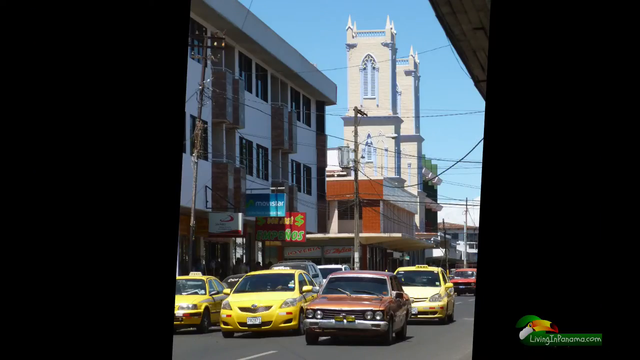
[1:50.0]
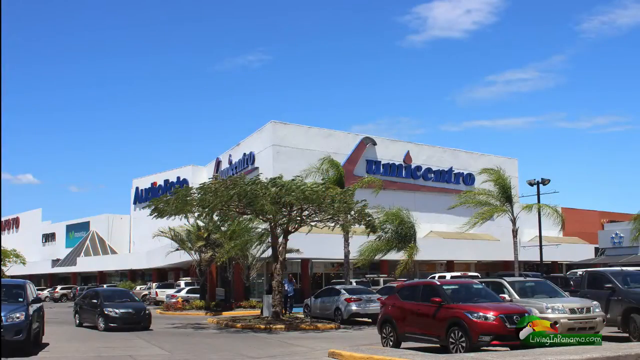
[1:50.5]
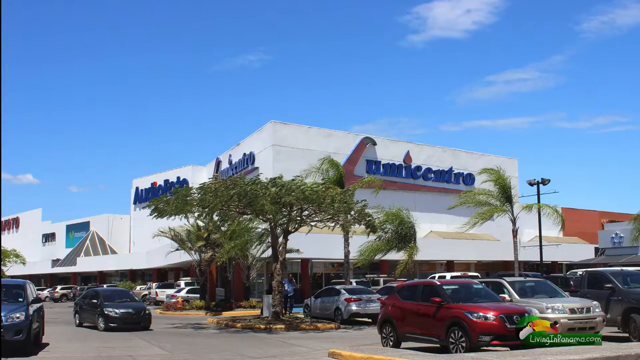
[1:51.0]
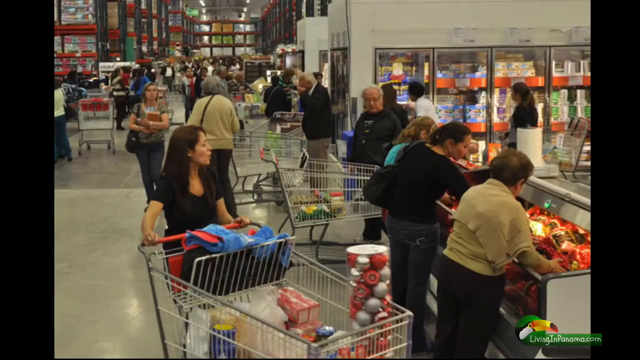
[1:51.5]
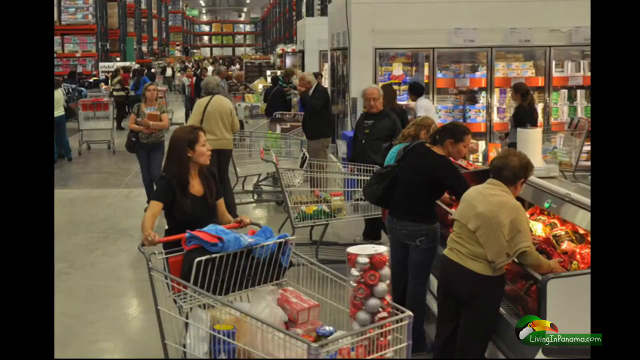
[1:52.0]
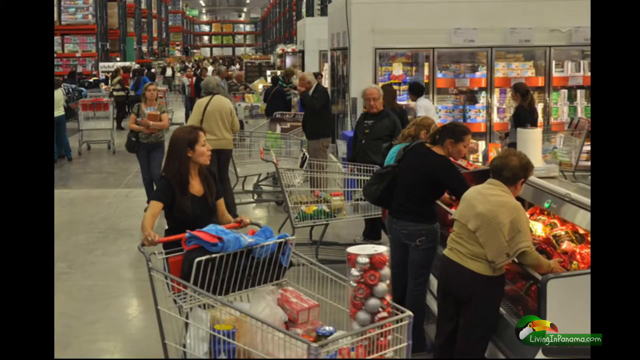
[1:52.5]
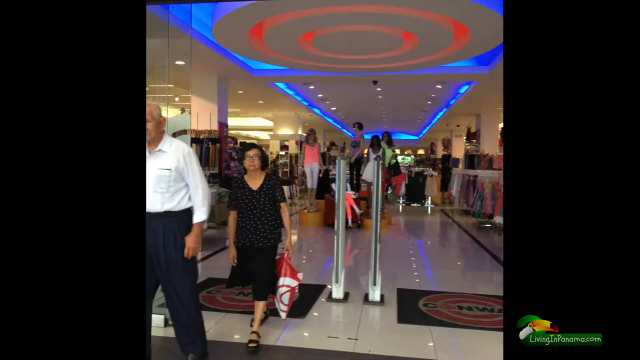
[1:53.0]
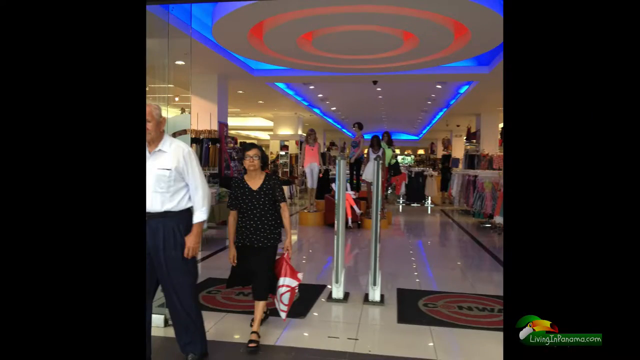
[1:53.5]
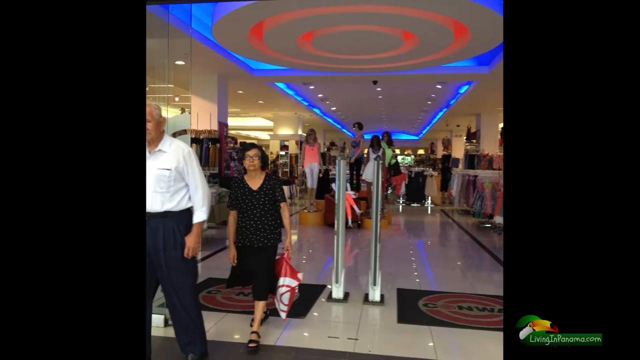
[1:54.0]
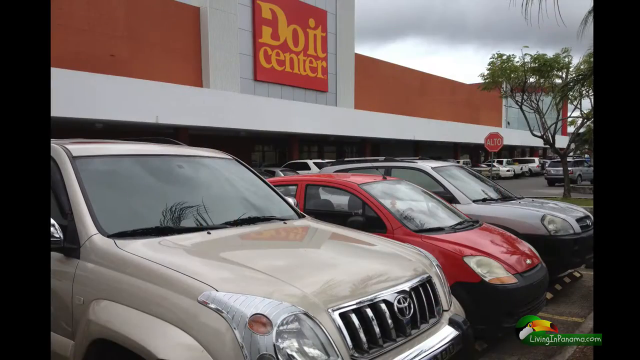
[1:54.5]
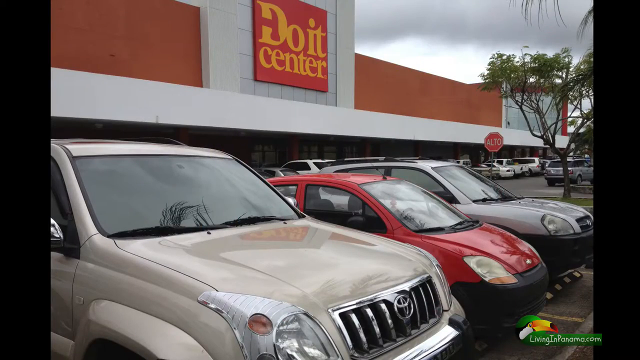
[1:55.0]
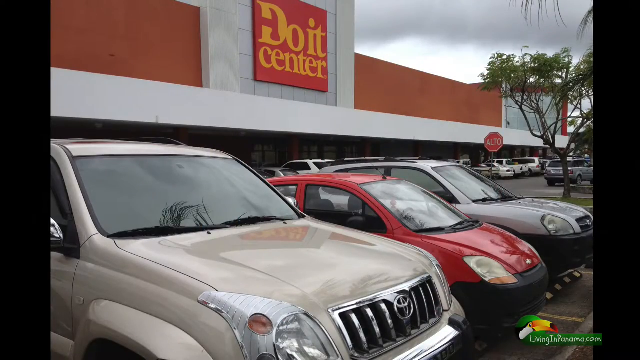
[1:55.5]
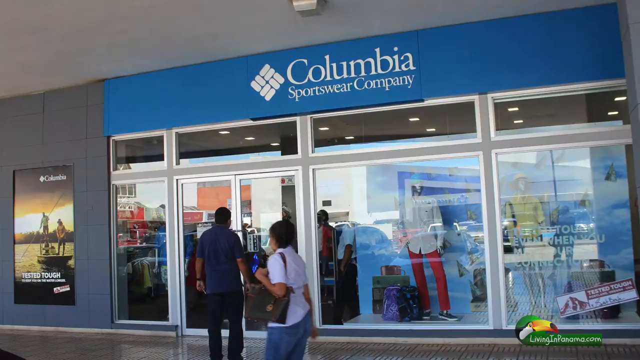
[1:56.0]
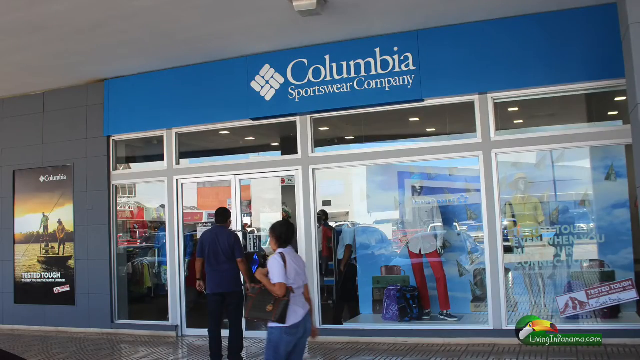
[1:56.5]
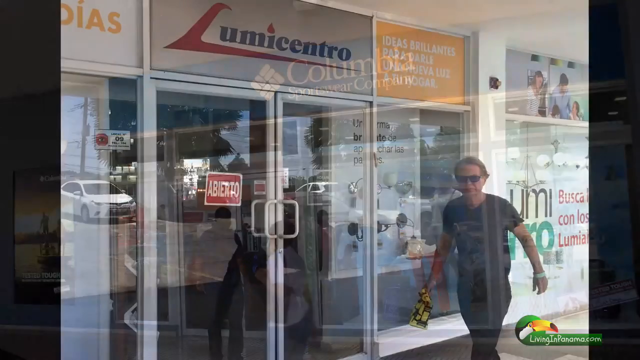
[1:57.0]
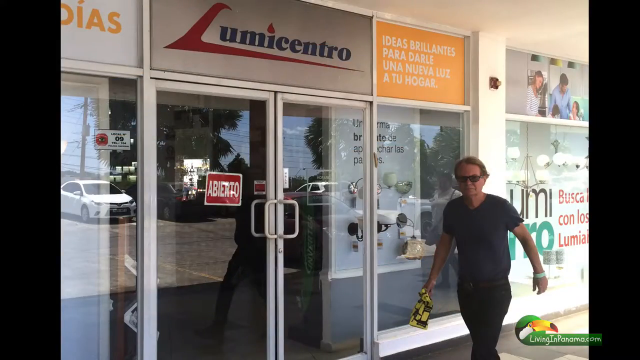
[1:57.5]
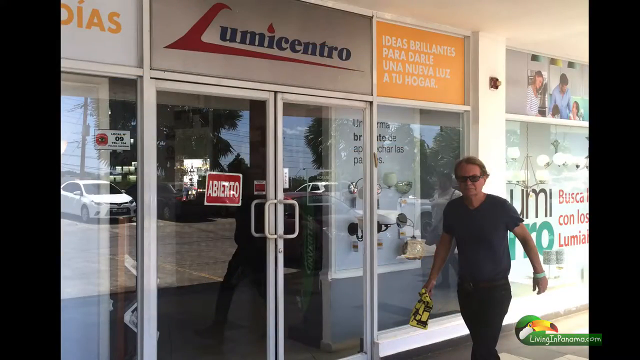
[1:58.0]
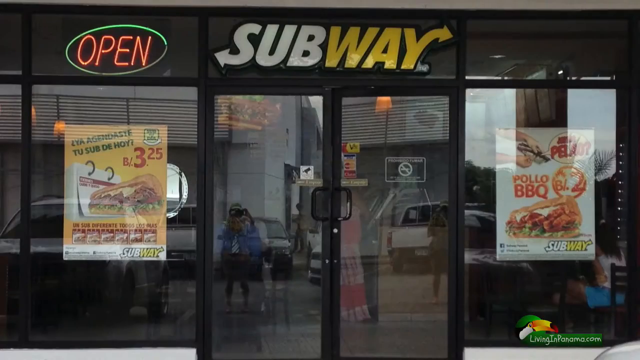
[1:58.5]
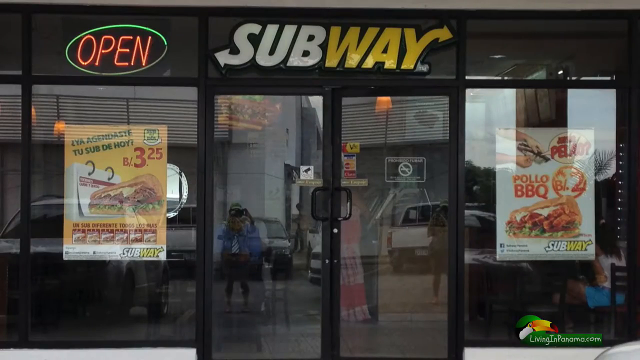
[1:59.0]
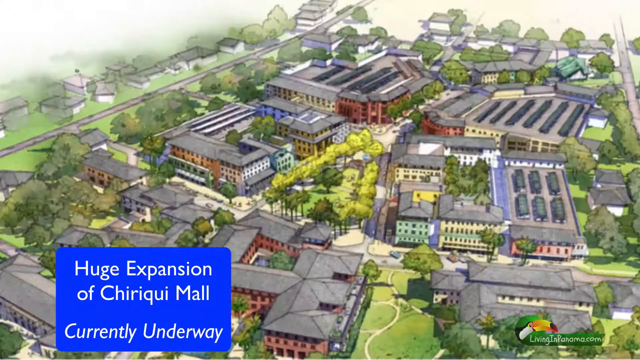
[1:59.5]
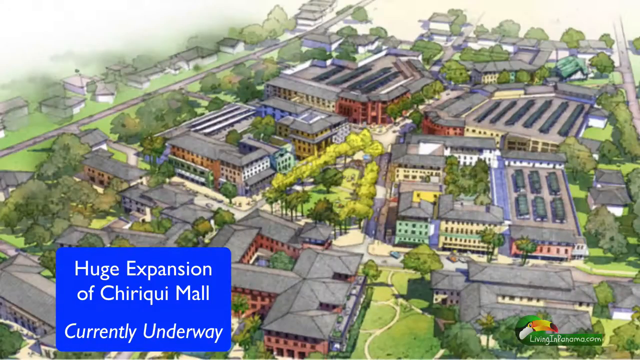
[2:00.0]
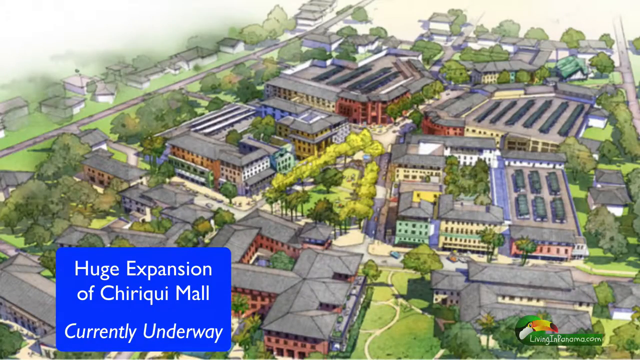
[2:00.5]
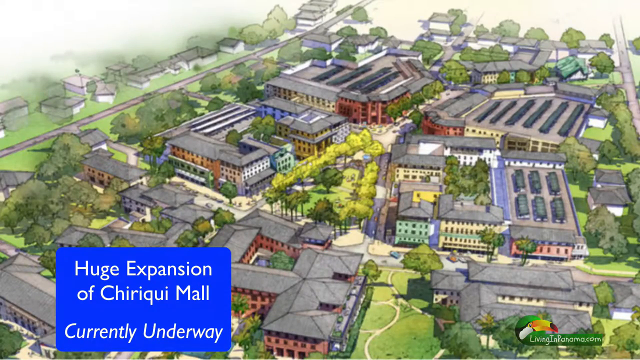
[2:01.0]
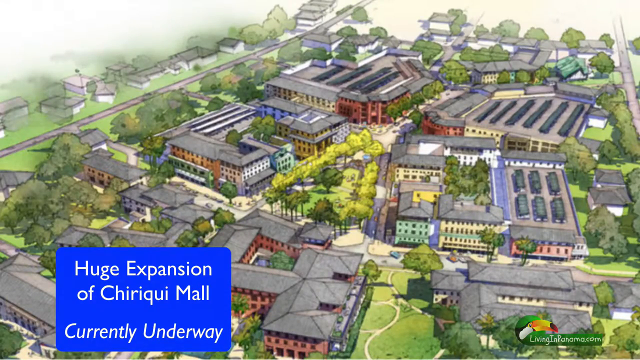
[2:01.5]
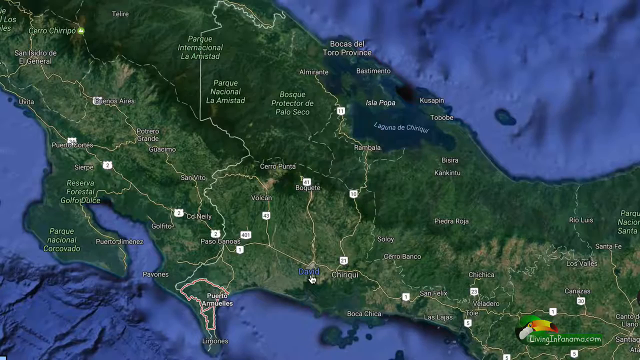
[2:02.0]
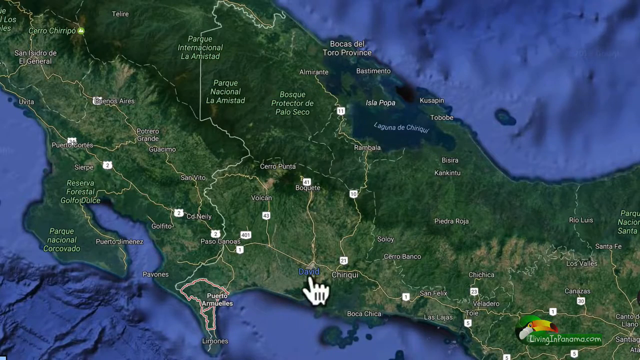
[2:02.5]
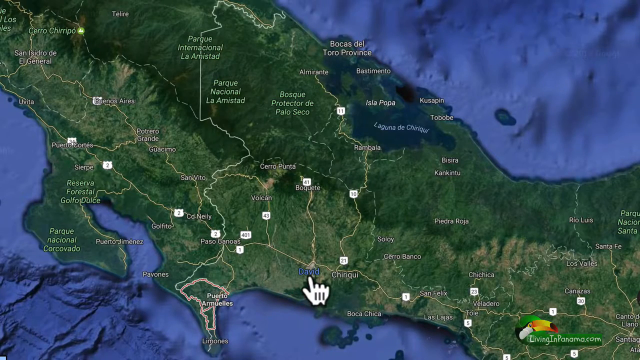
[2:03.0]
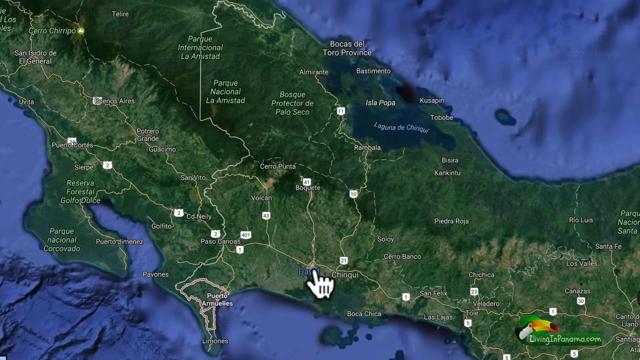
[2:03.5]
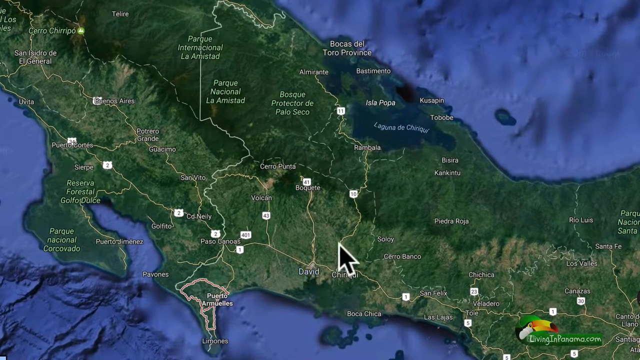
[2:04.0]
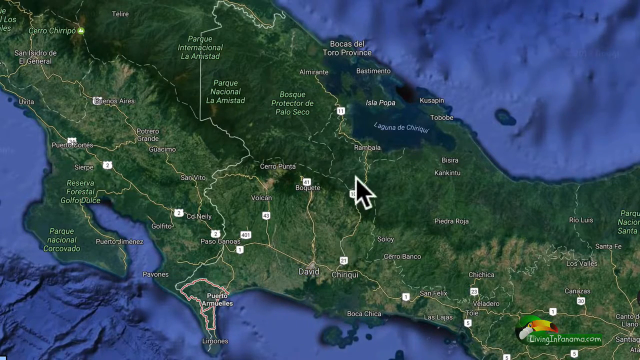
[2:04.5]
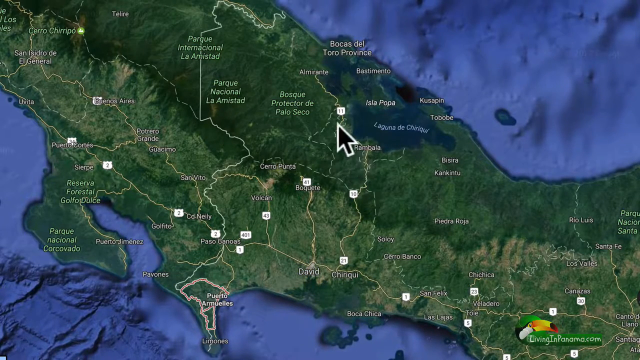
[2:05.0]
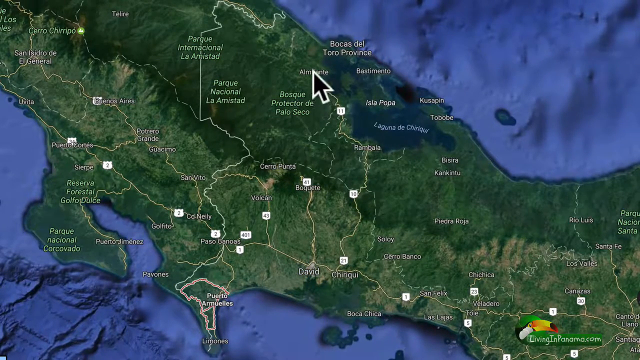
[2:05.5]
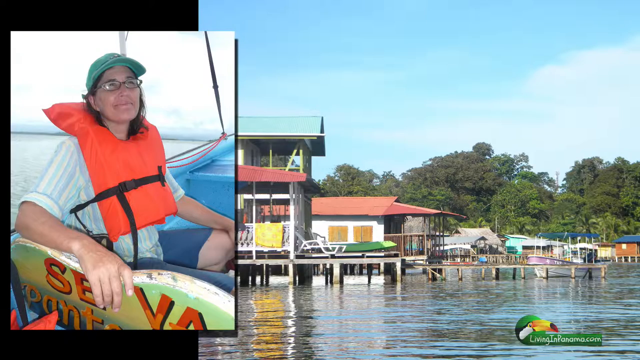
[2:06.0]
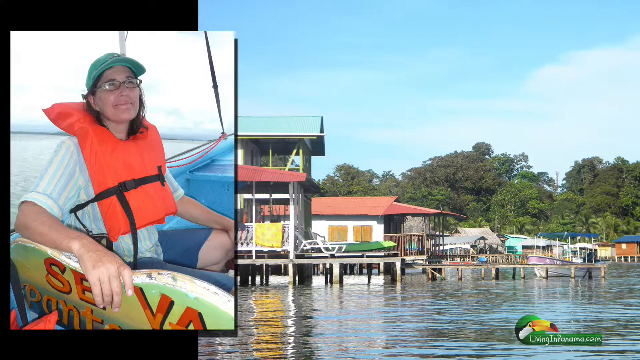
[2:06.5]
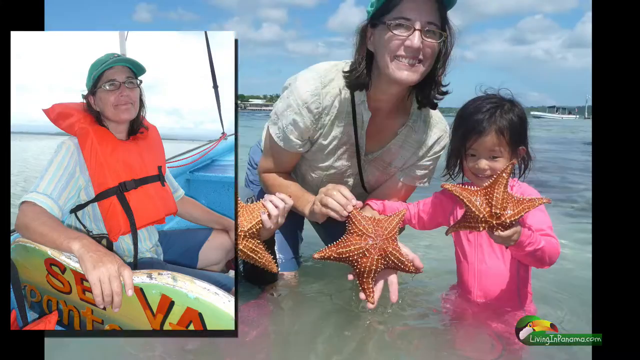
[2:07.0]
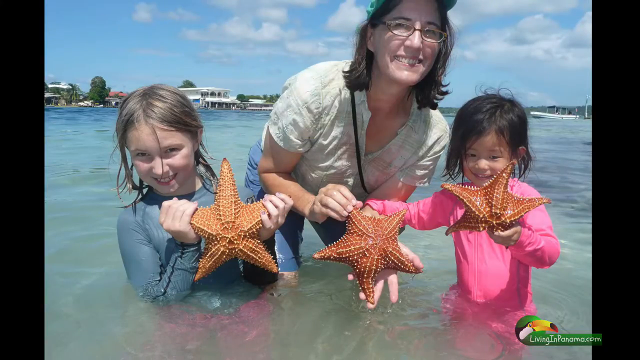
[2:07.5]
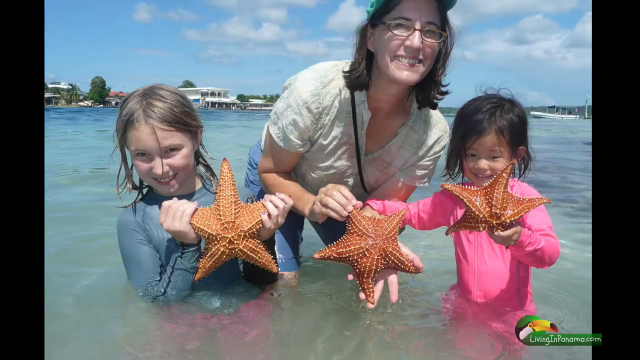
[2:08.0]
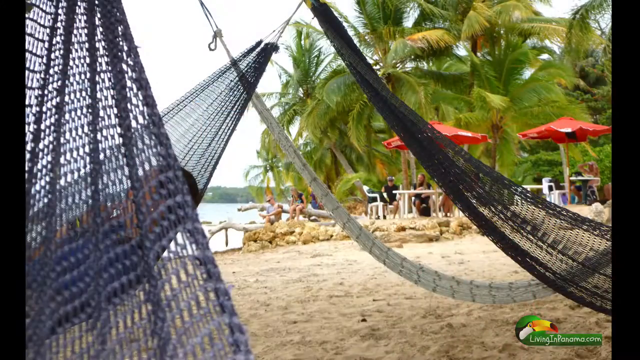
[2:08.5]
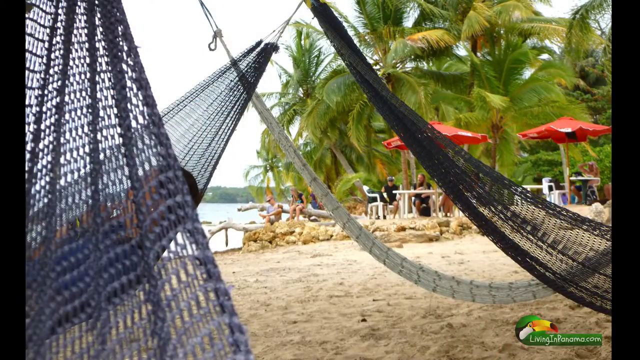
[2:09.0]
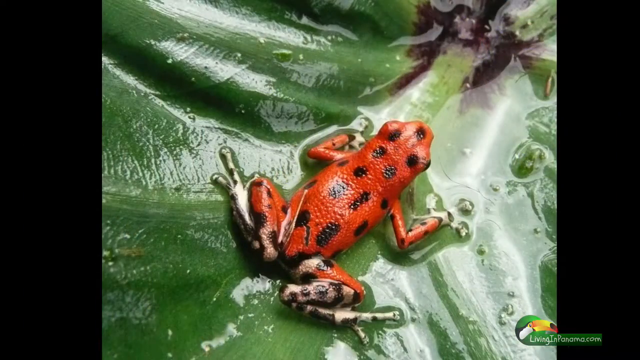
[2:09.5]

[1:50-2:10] Images of a city centre show a supermarket with lots of people inside shopping with large trolleys, then pictures of the cars outside of Dewitt Centre, an image of a Columbia sportswear company shop, a Subway stall, and a drawn image of a large shopping area that says "huge expansion of Chiriqui Mall". The video cuts to a map of Panama with an arrow pointing up to the top of the country. Images follow of a lady on her own sitting in a boat wearing a life jacket, and then the same lady standing in the sea fully clothed, wearing a cap and glasses, with two children either side of her; all three hold orange starfishes in their hands. It then cuts to a picture of a beach with sand and a hammock.